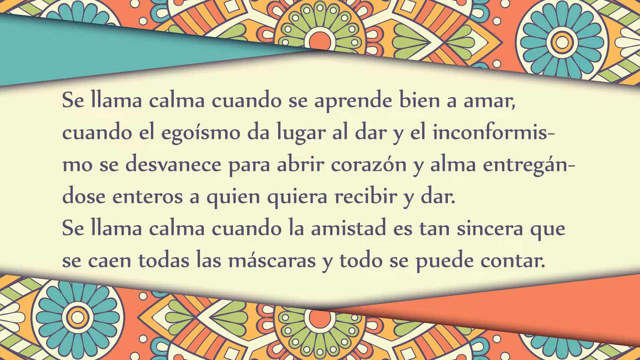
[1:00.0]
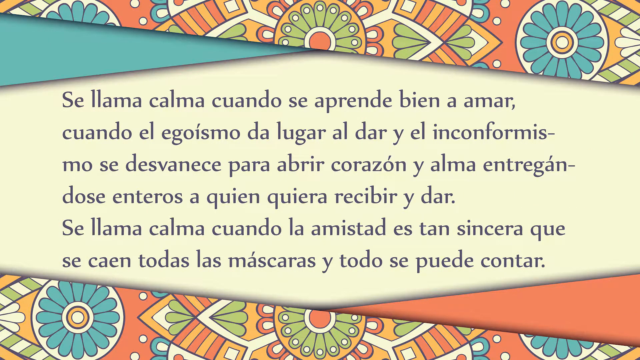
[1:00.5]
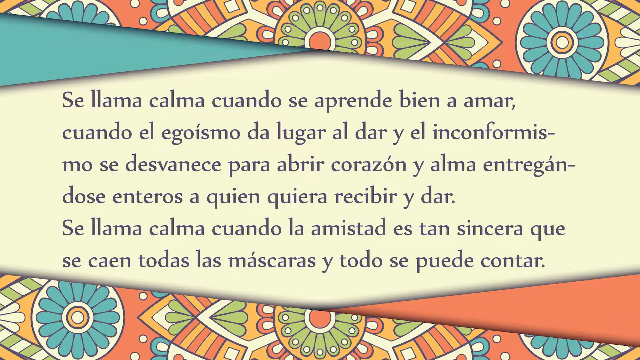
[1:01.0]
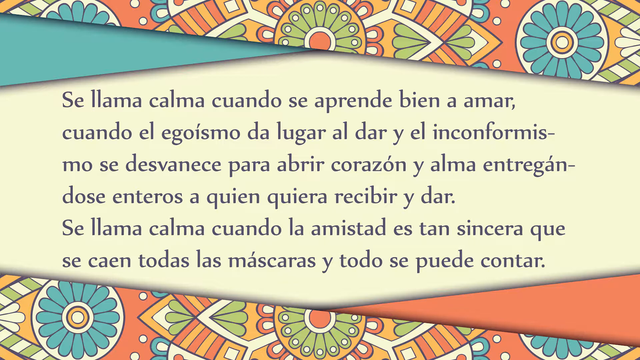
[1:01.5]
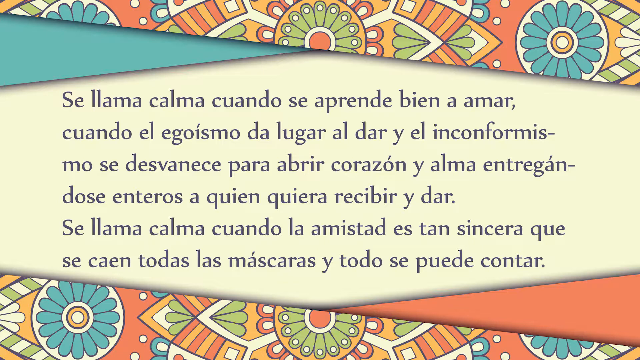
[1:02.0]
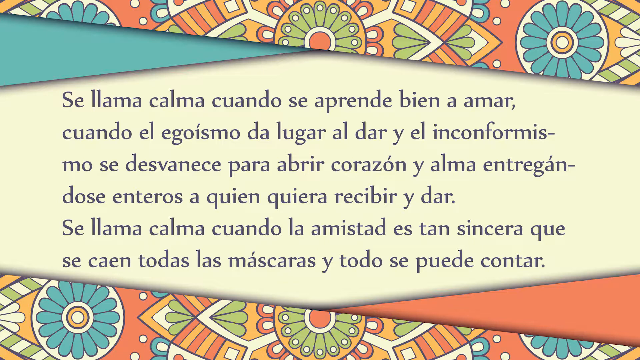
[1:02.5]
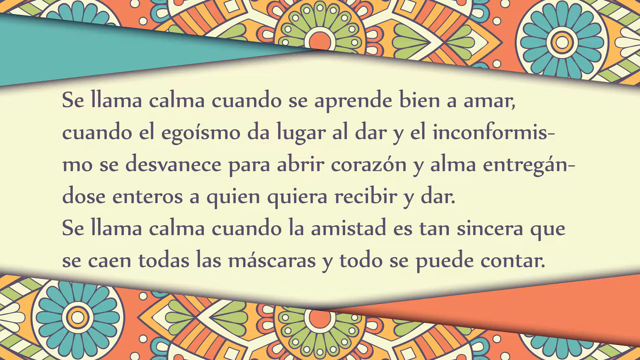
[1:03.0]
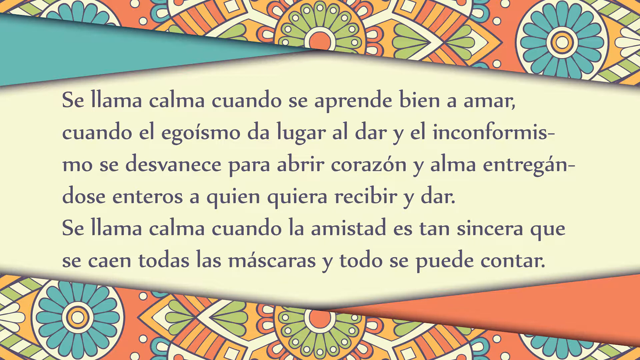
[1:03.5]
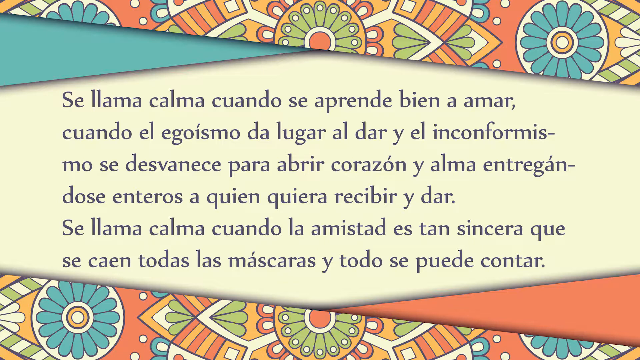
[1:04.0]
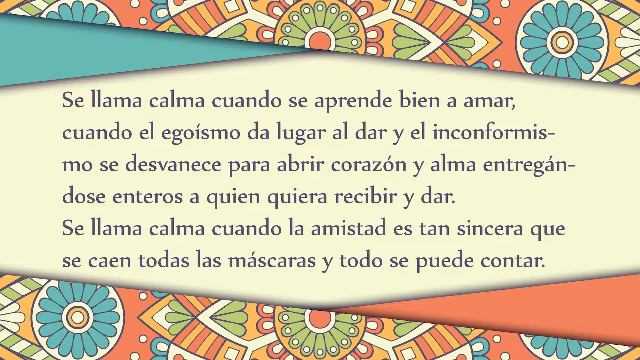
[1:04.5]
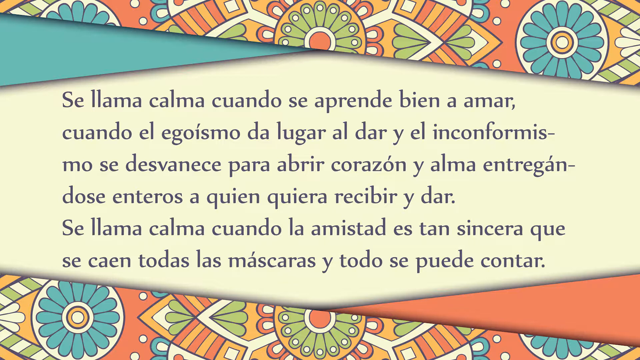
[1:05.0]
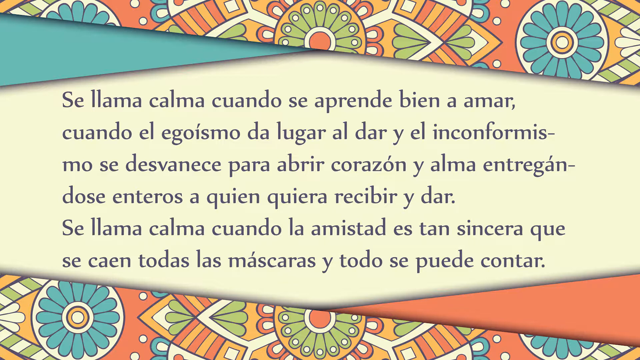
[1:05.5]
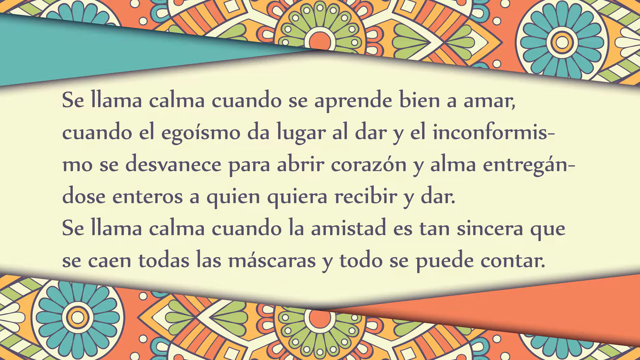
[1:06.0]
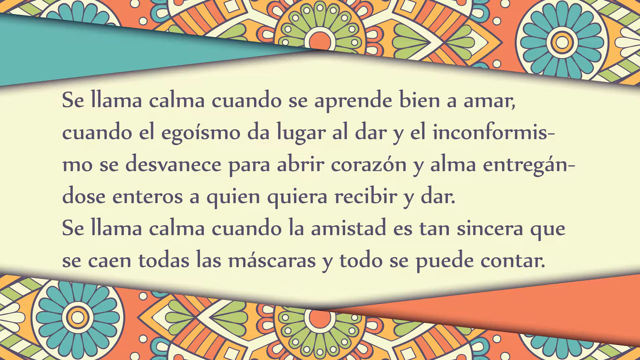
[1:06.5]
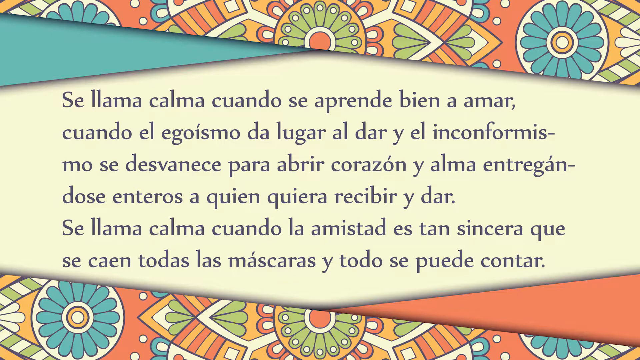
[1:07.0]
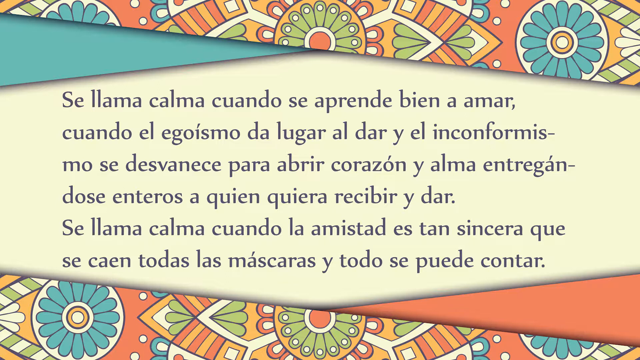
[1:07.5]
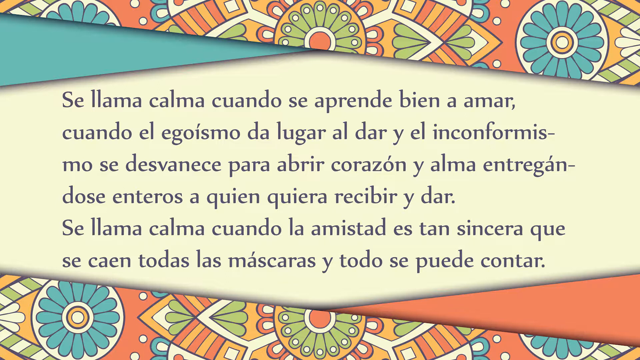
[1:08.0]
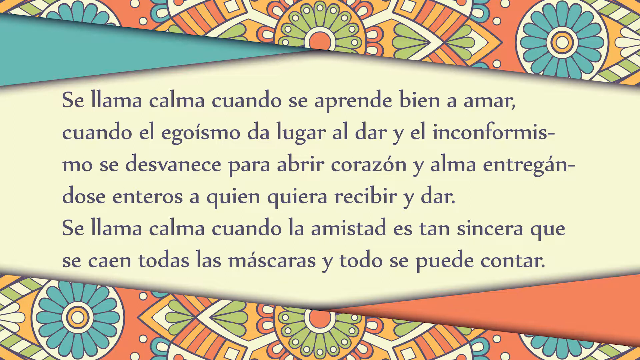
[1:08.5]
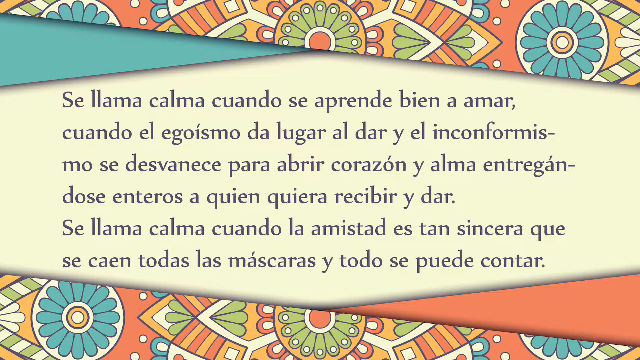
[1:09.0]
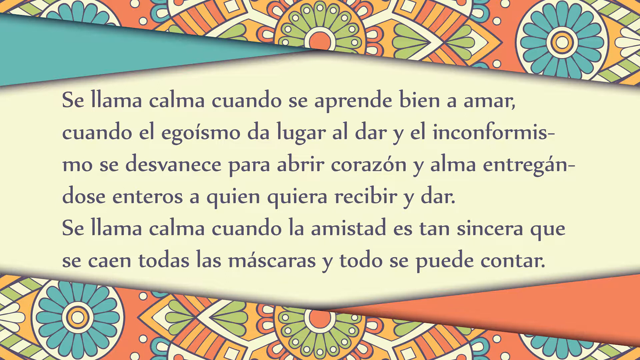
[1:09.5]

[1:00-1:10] The image stays for several seconds with no change to the text, colors or placement. In the top and bottom designs, the center circle is orange and green. At each end is a circle with a blue flower-type pattern whose center is white, then a layer of yellow outlined in black, then white. There are also polka dots over an orange background. At the very edges are lines of green and white stripes, and red and orange stripes around the center.